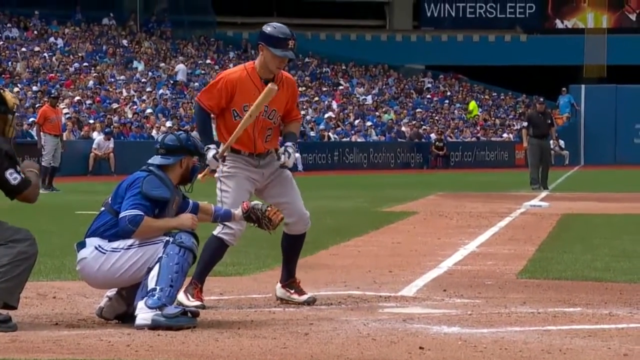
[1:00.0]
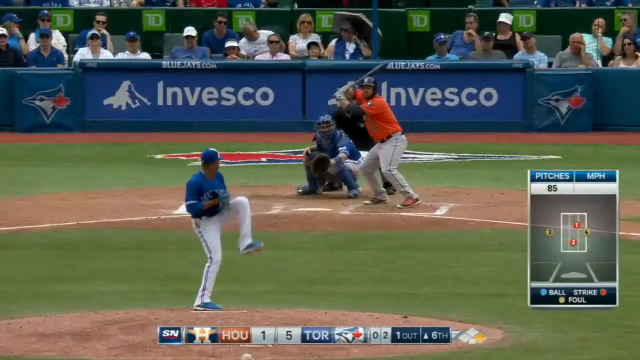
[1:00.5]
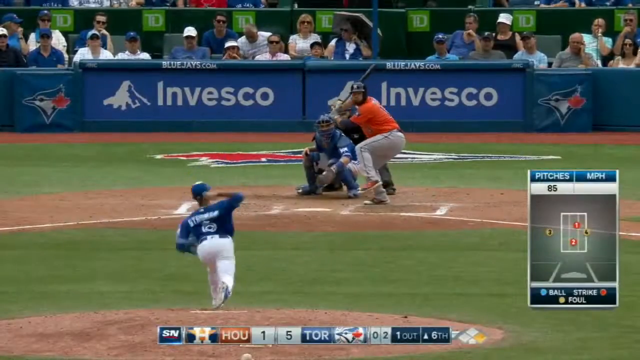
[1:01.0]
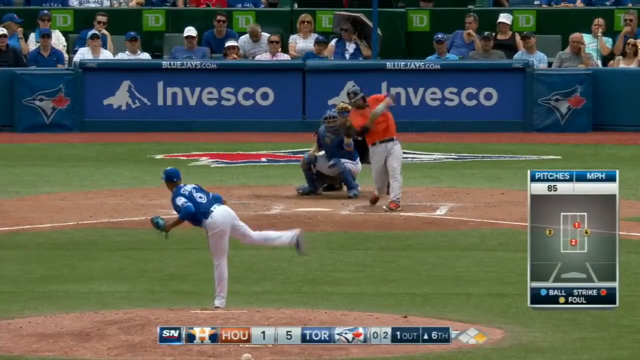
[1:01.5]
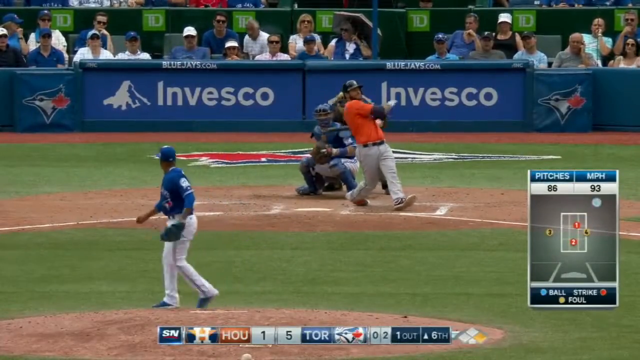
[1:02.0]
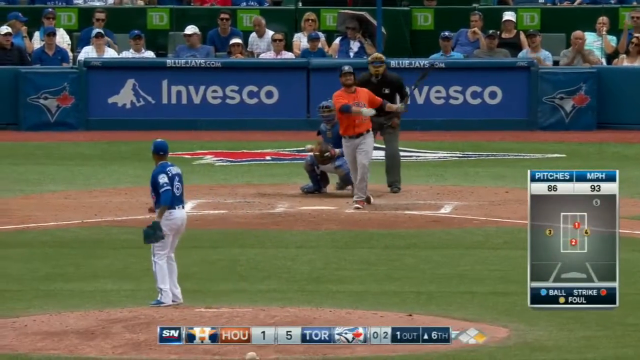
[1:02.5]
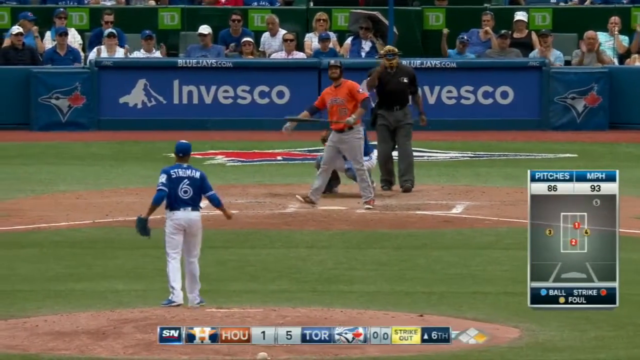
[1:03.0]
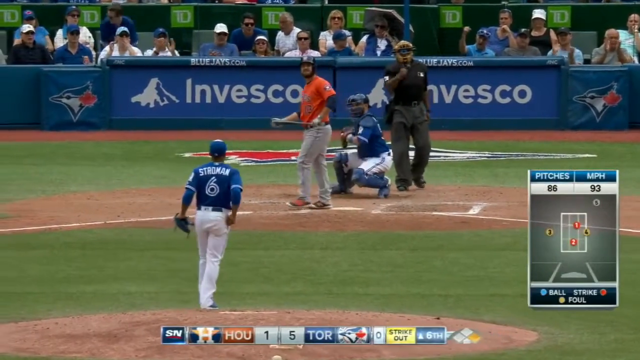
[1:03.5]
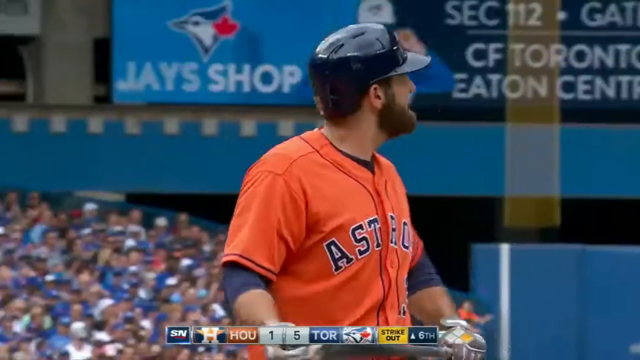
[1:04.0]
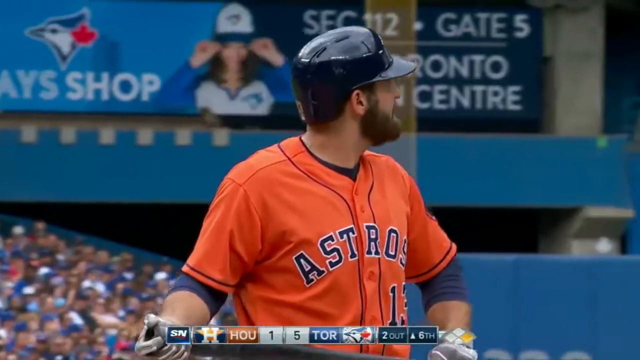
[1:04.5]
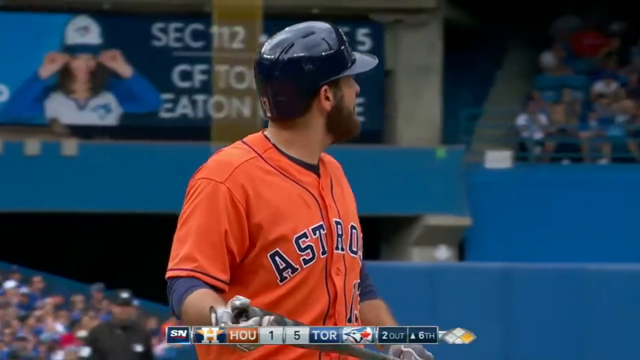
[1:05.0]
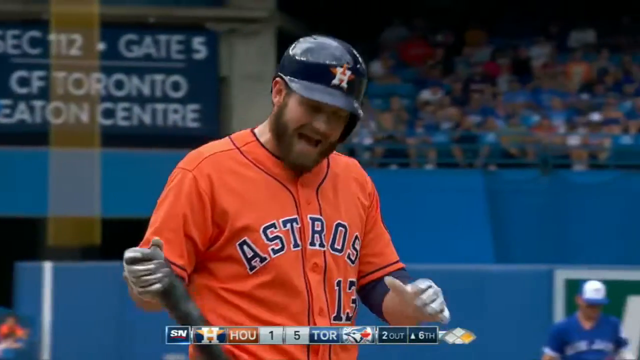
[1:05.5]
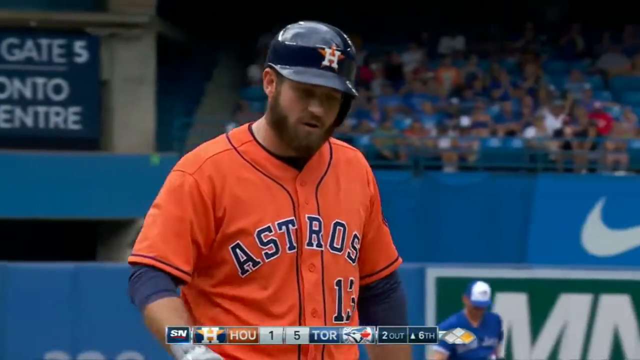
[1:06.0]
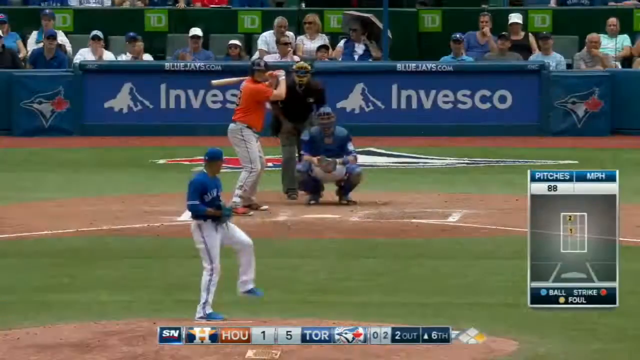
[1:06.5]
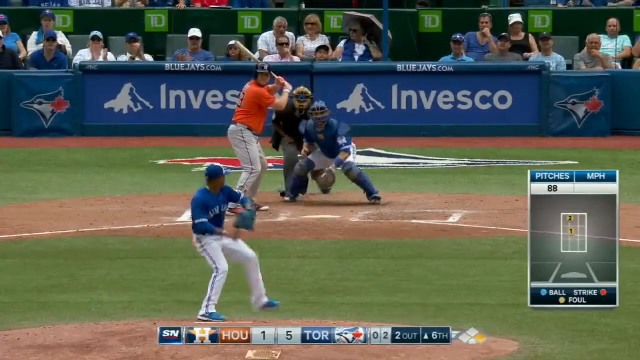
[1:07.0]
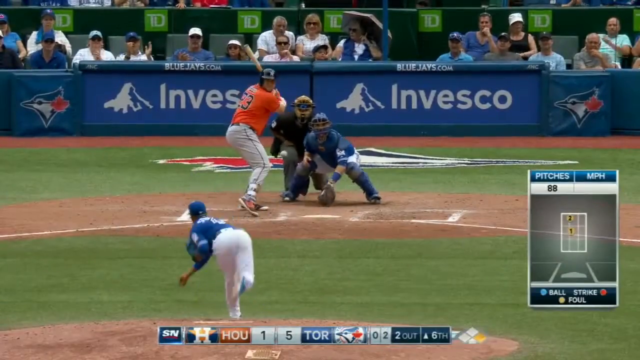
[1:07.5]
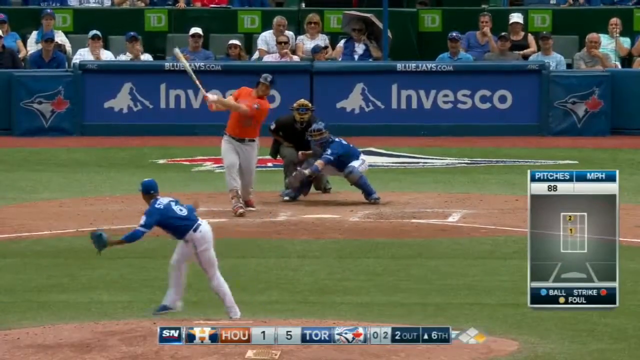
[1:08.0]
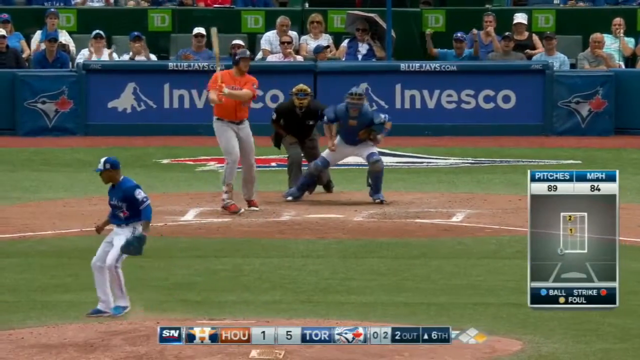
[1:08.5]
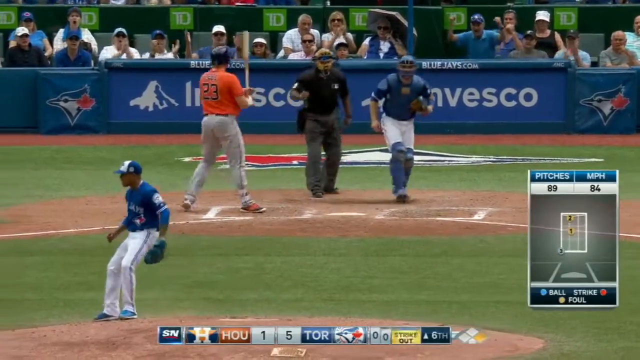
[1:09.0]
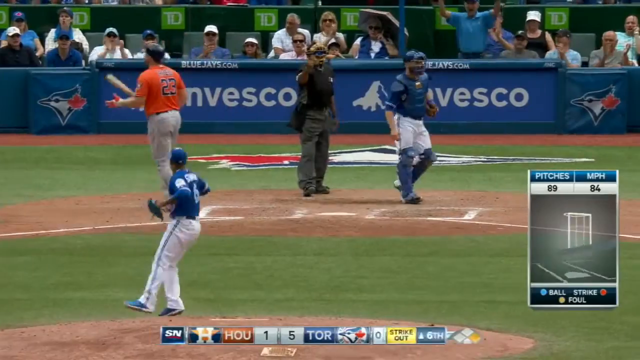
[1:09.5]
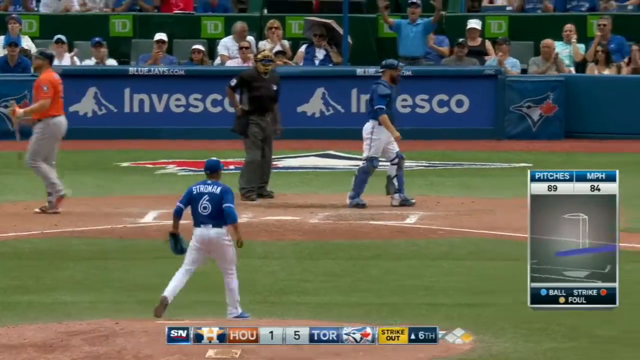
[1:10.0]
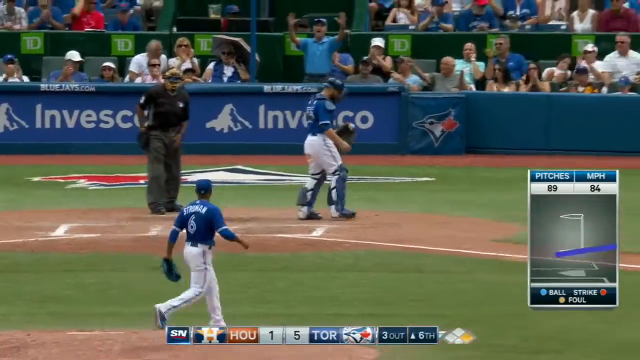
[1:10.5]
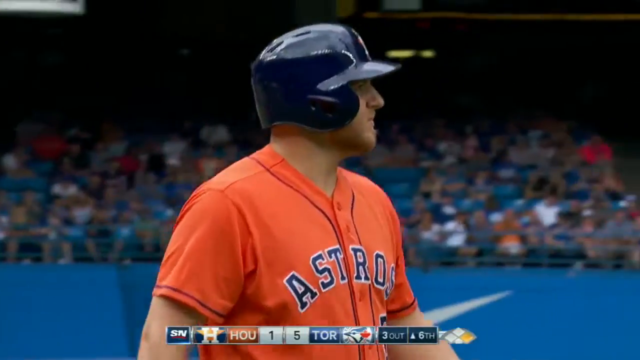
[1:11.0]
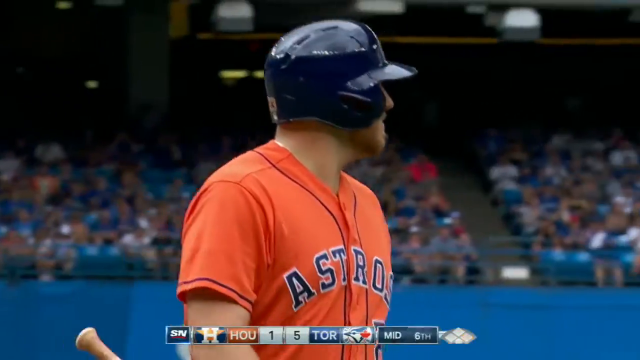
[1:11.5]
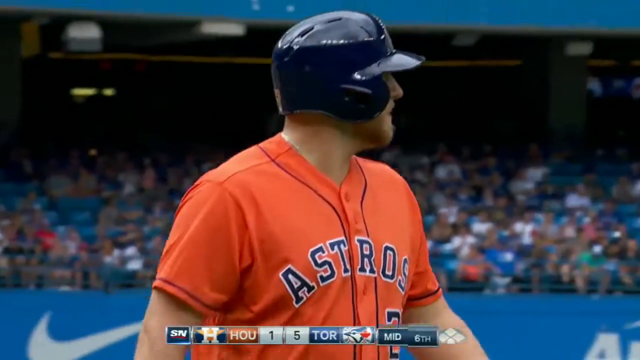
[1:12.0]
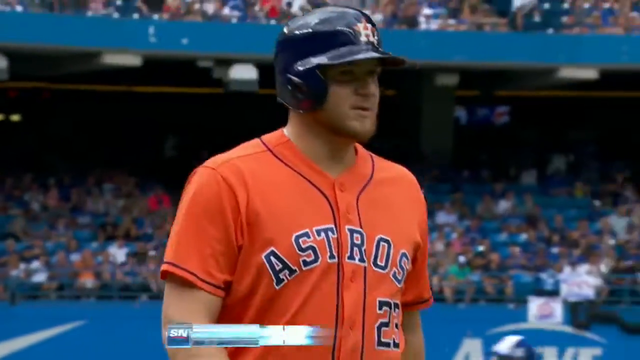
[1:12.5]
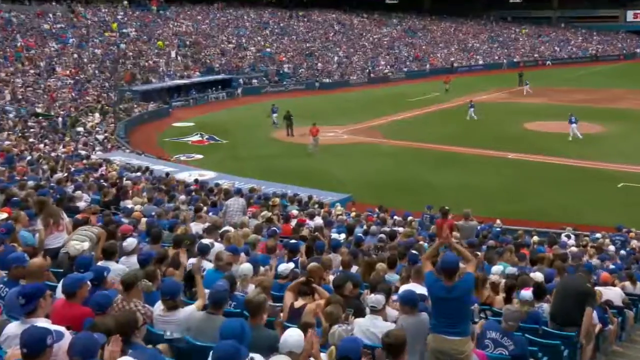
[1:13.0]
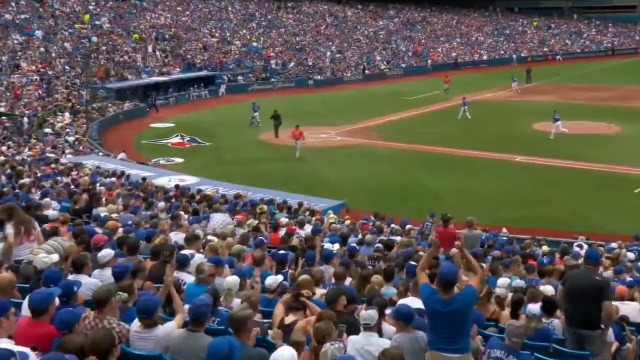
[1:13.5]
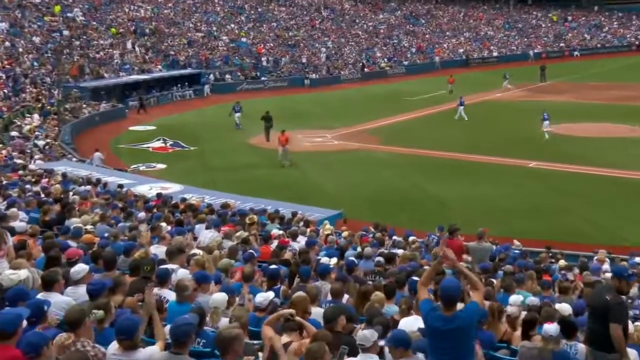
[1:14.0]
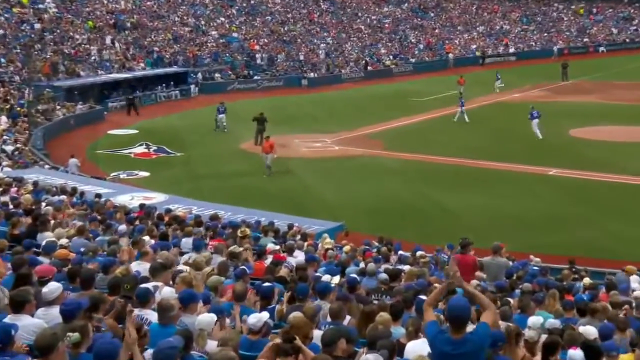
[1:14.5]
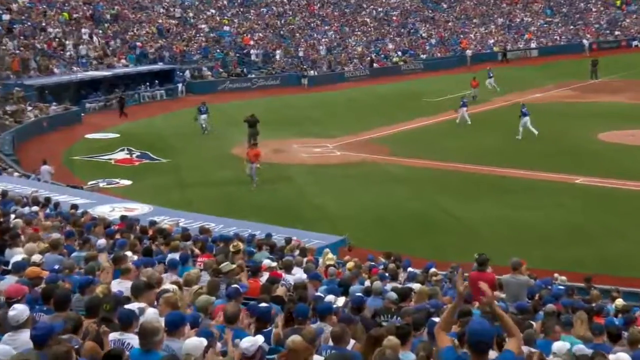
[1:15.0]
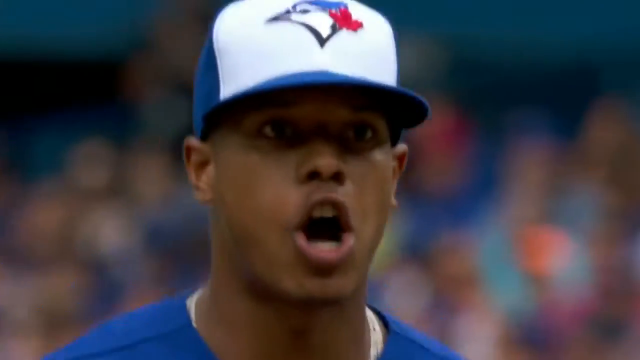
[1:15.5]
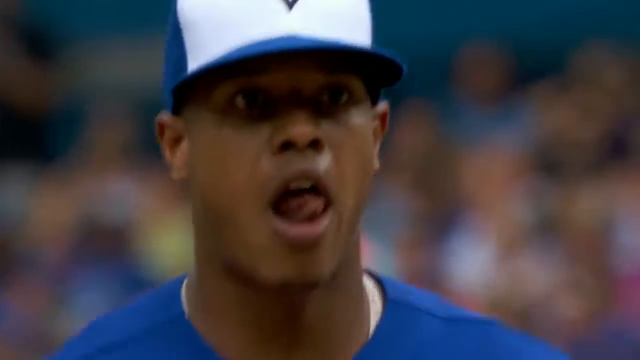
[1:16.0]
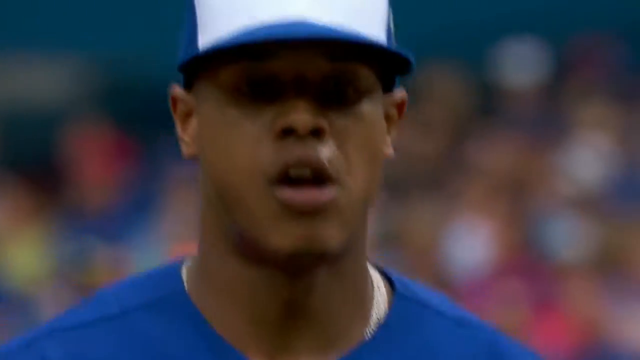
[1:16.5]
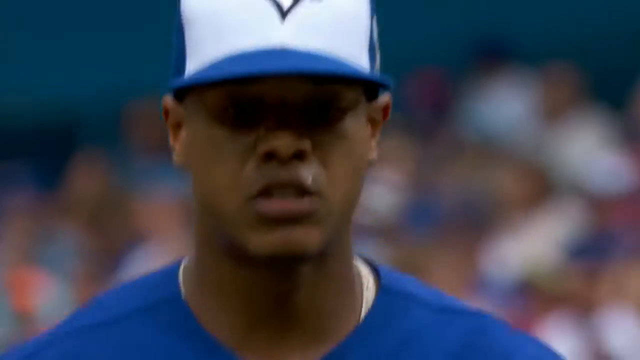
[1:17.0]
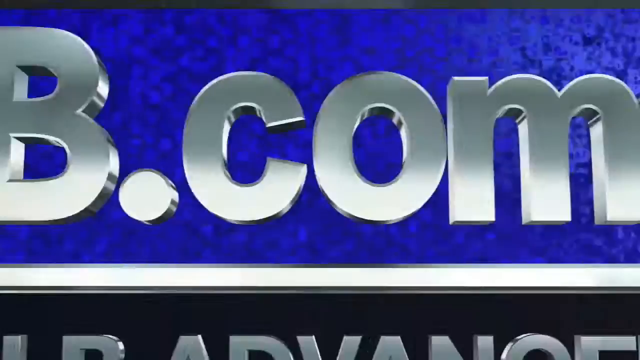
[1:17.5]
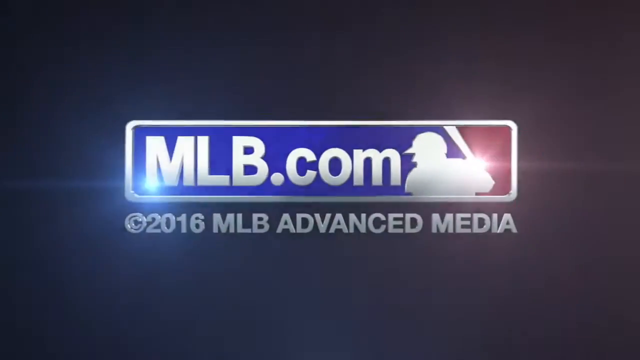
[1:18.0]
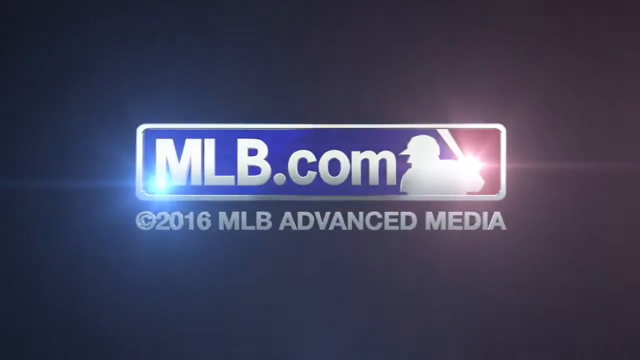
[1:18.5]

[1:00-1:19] The crowd is shown, with many people in shirts of different colors such as blues and reds, and someone in lime green on the right side. Sponsors appear on the barricades. A different camera view shows an Astros batter and the Blue Jays catcher, with "Winter Sleep" on either a screen or a wall in the upper part of the frame. A pitch from the Astros pitcher is shown at normal speed; the batter, number 13, swings and is struck out. Another batter is about to swing, with "Invesco" in white writing on a blue backing in the background. He is struck out on an 84-mile-an-hour pitch. From this camera angle the stadium looks nearly packed. The game appears to be over, and the text "mlb.com 2016 advanced media" appears.